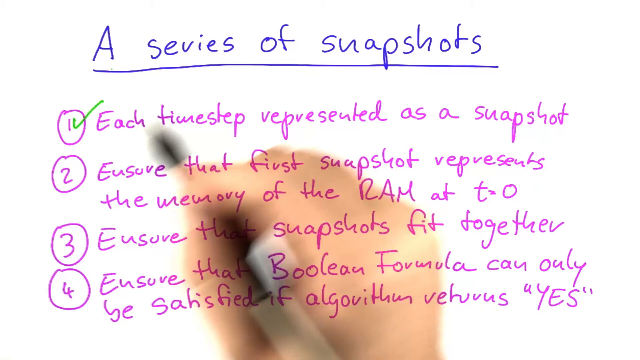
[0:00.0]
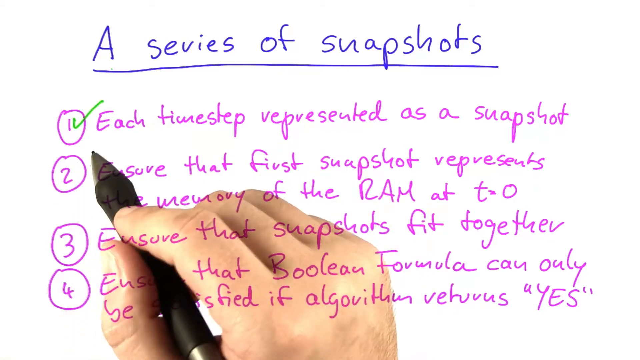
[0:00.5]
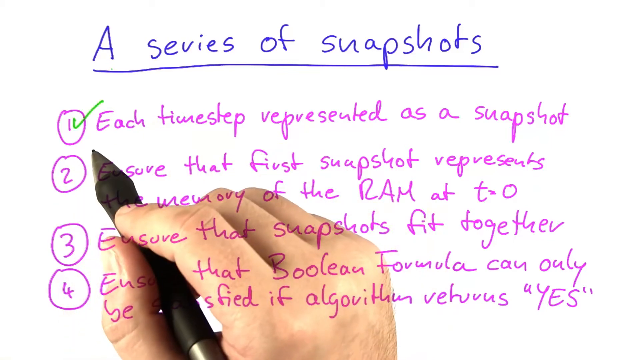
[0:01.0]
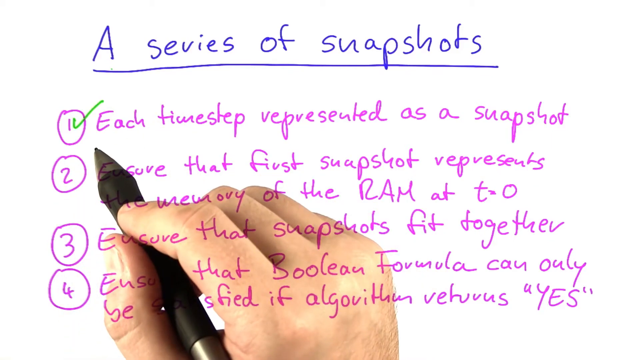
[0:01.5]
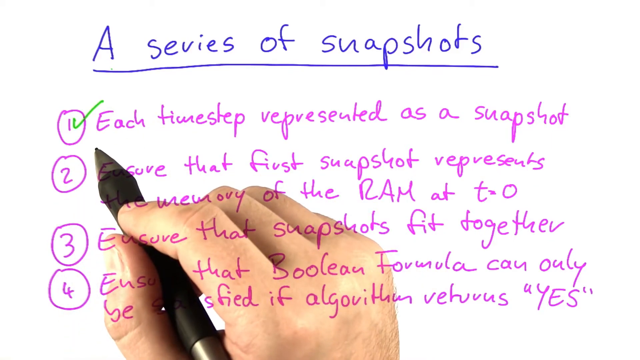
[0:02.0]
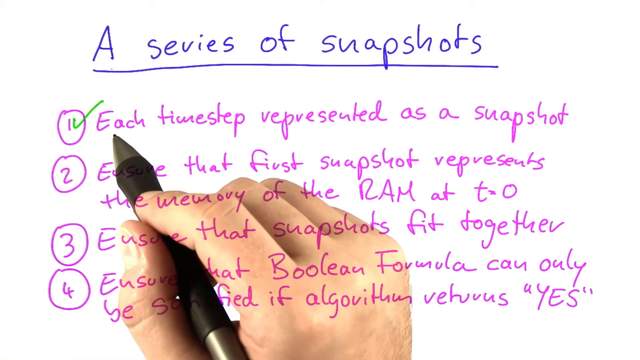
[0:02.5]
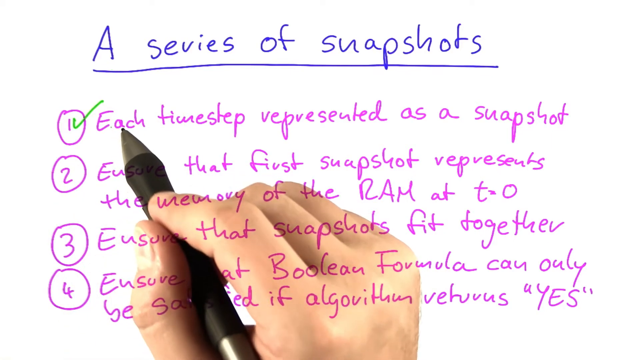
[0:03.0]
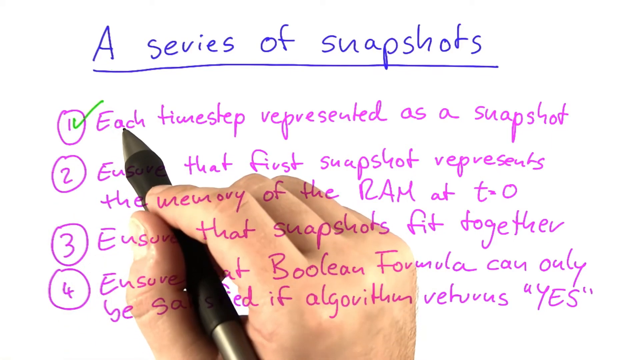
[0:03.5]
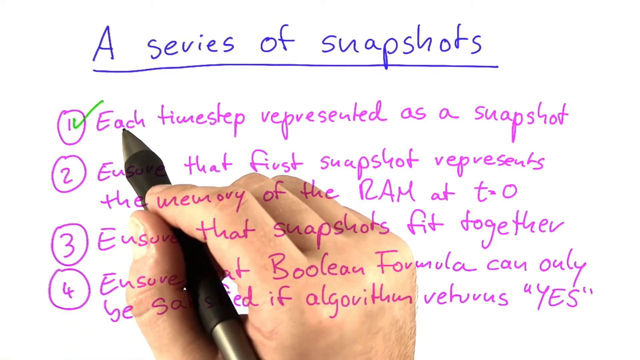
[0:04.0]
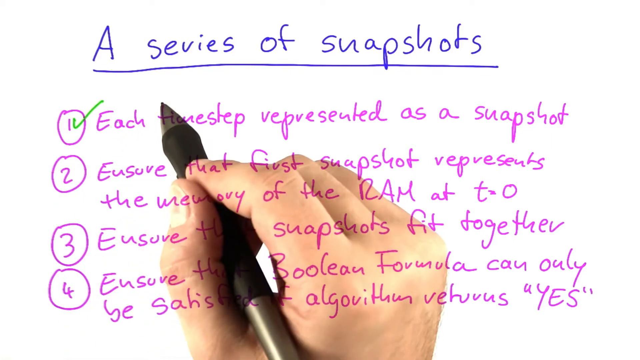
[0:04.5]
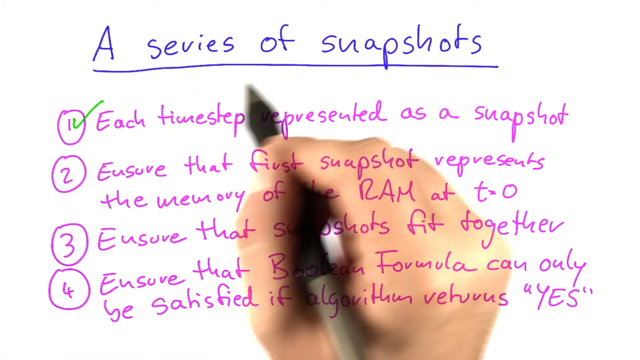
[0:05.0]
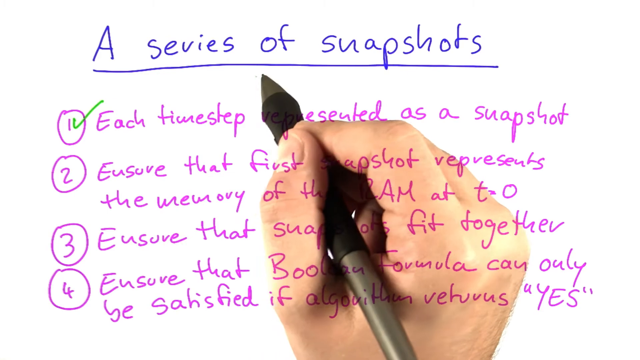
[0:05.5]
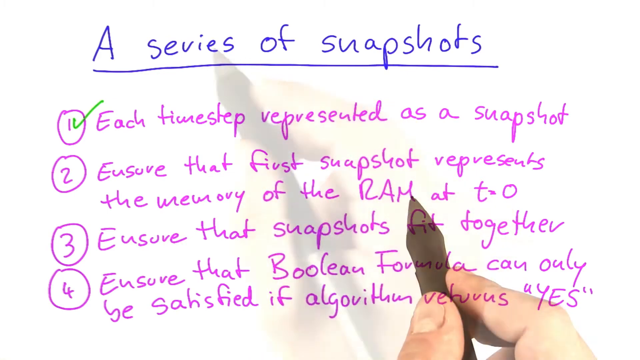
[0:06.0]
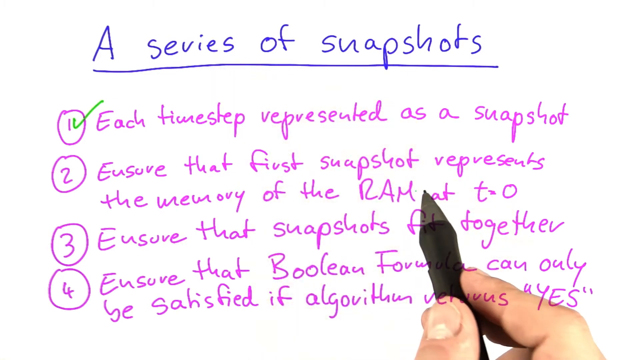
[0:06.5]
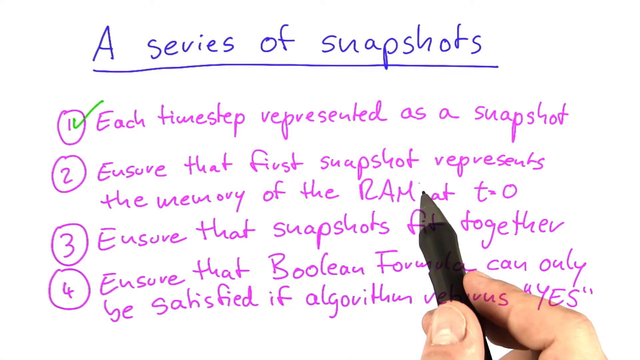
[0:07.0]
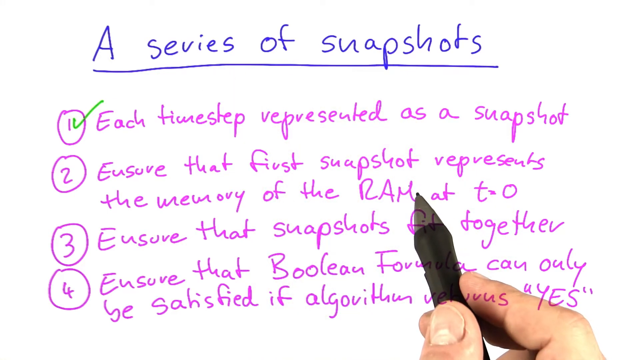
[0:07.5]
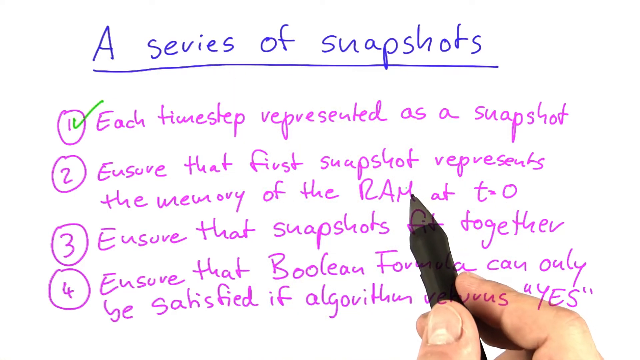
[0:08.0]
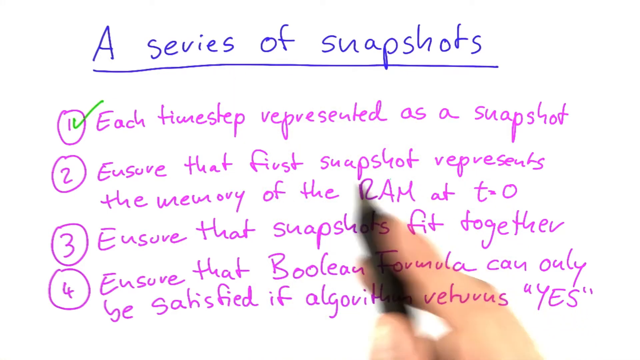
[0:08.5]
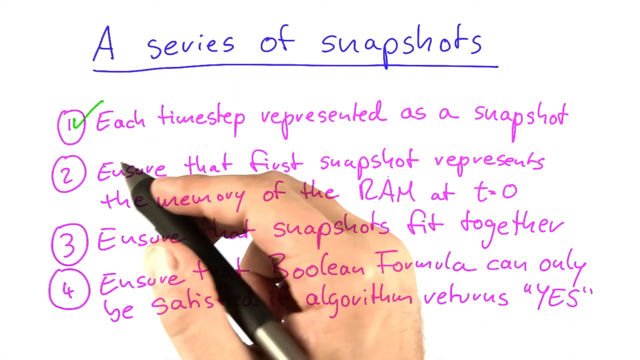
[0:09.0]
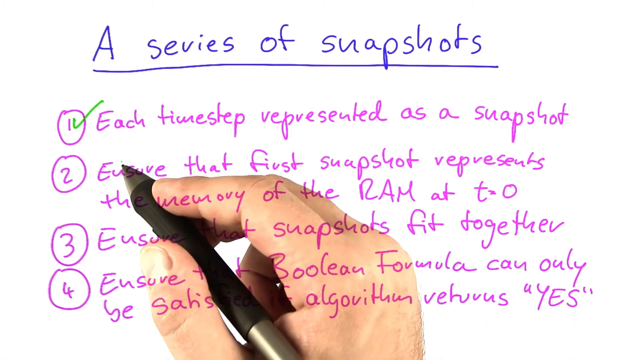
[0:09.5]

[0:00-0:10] A person holds a black pen and writes on a white board, appearing to think as he writes. The words are written in pink and the topic is written in blue. He seems to be teaching about a series of snapshots, and apparently is making a video for social media.